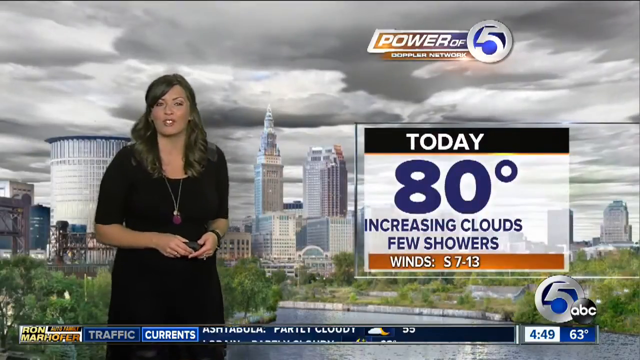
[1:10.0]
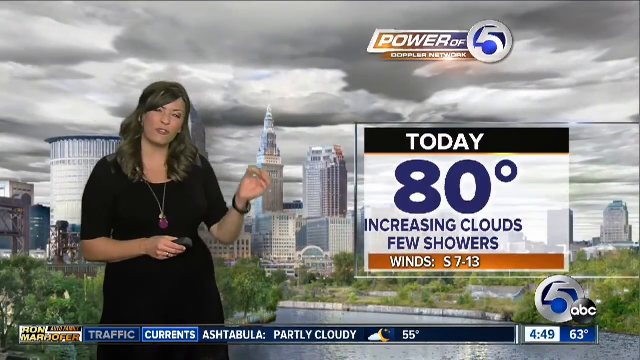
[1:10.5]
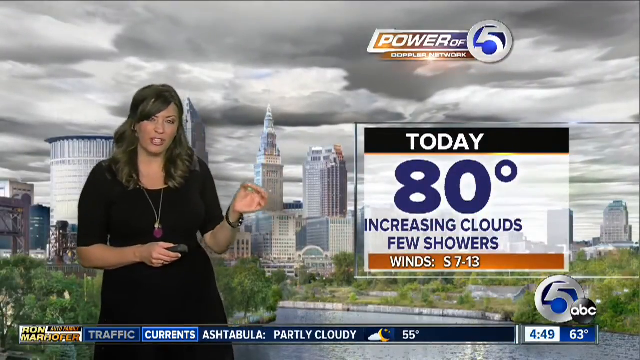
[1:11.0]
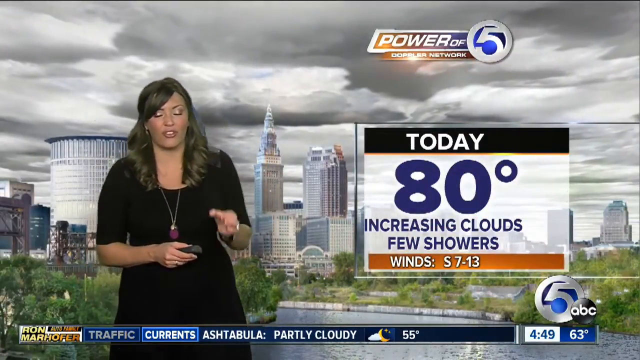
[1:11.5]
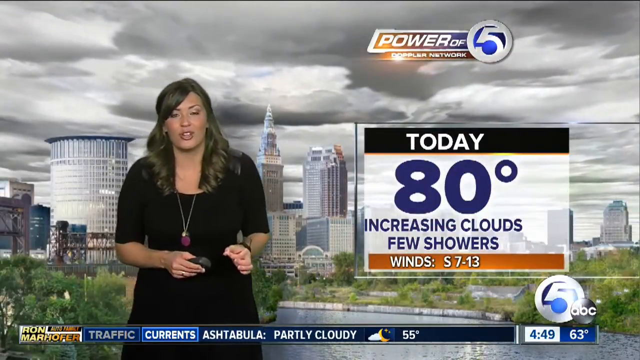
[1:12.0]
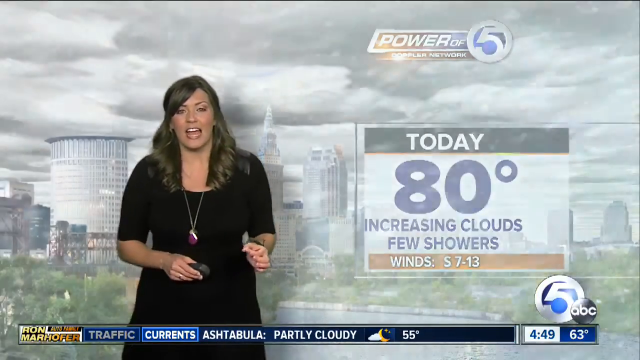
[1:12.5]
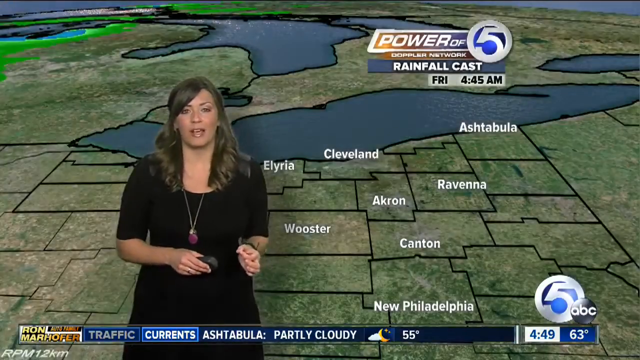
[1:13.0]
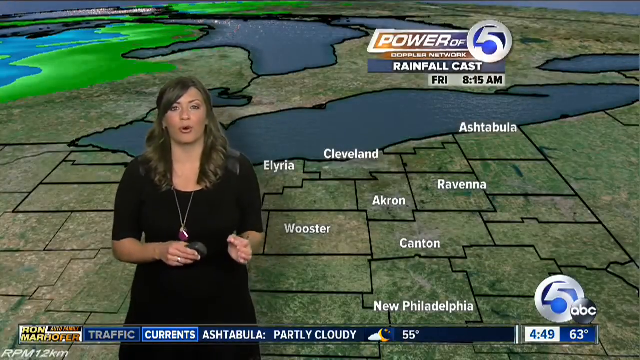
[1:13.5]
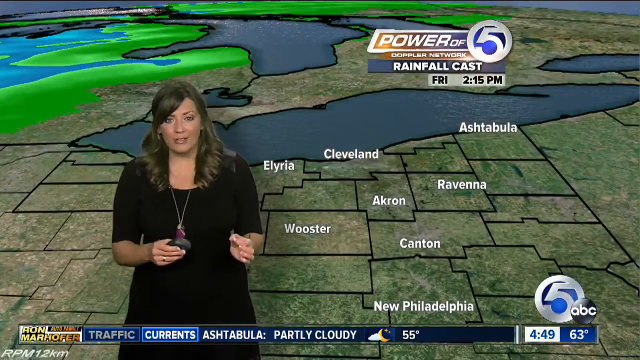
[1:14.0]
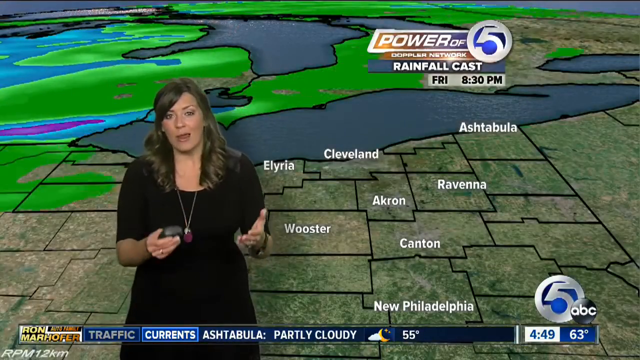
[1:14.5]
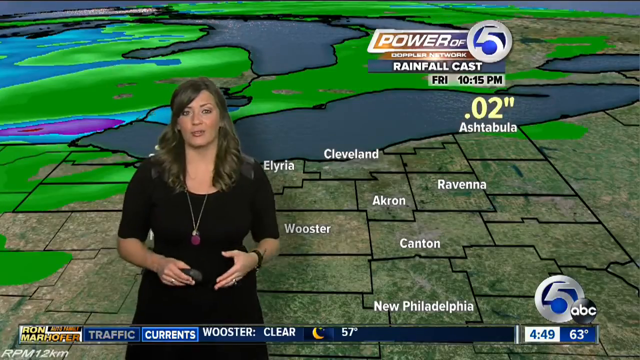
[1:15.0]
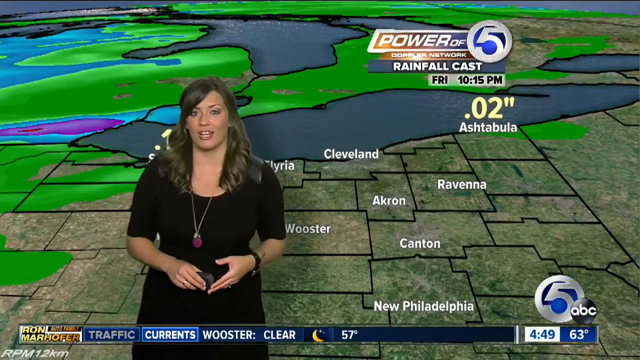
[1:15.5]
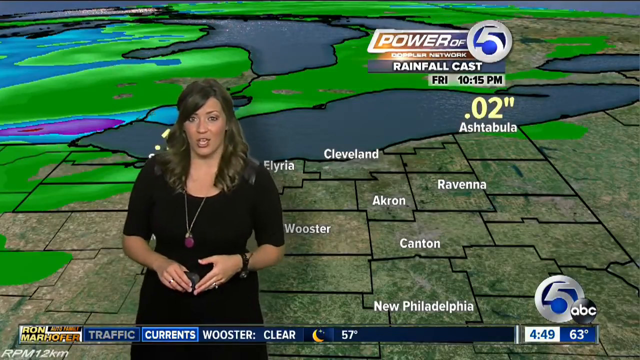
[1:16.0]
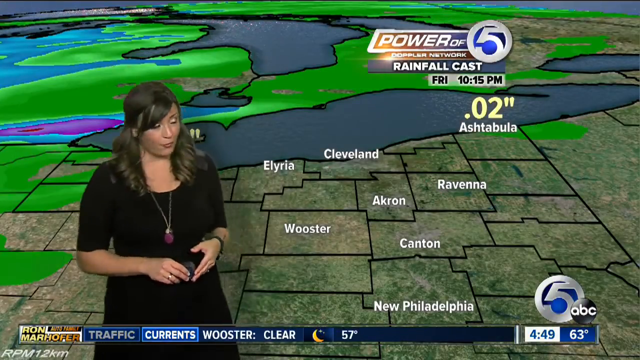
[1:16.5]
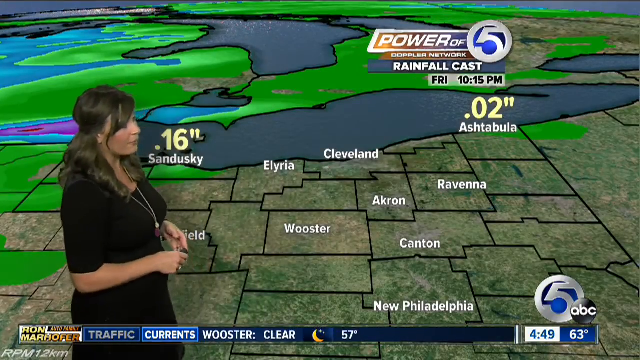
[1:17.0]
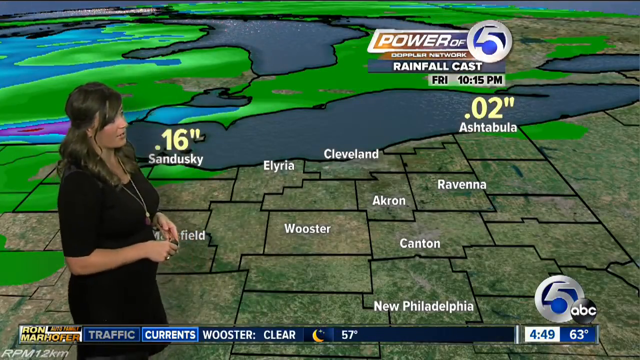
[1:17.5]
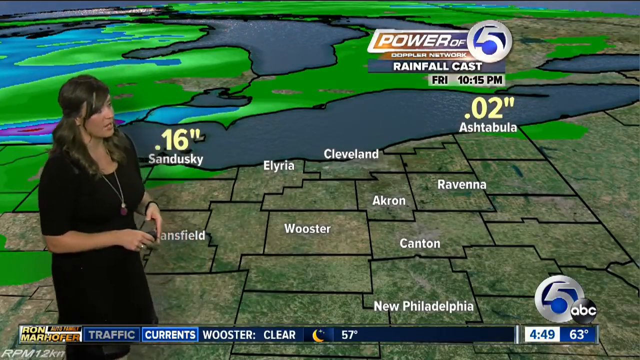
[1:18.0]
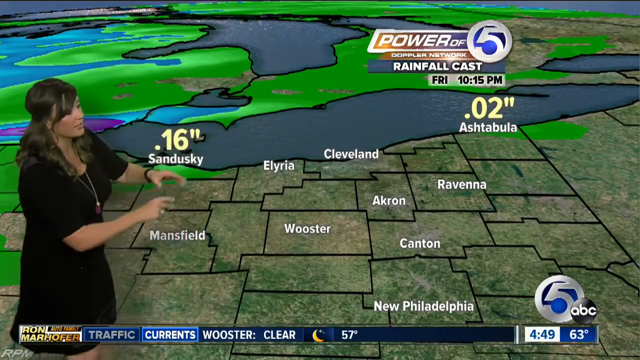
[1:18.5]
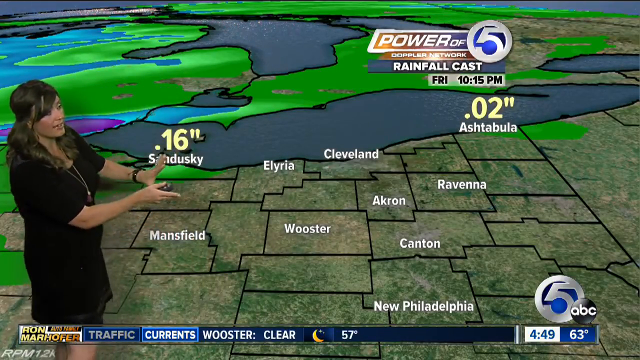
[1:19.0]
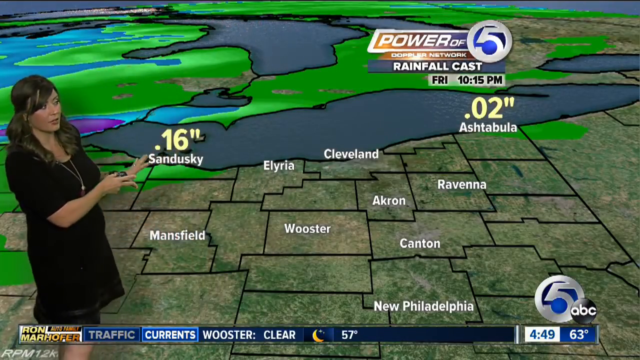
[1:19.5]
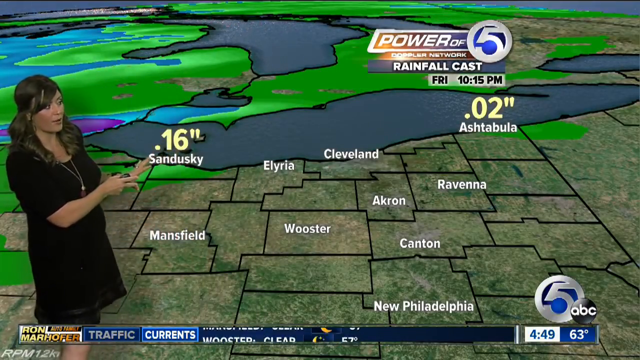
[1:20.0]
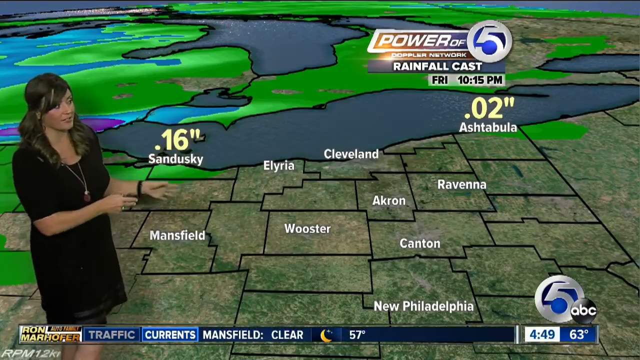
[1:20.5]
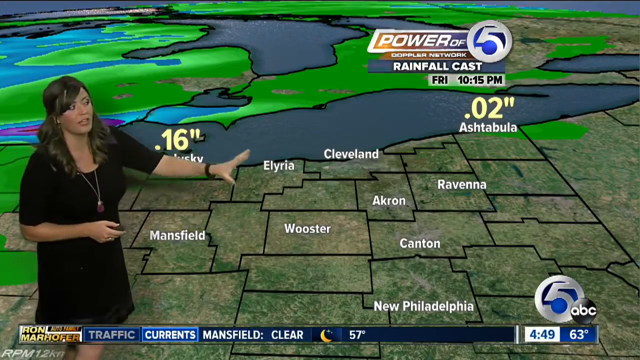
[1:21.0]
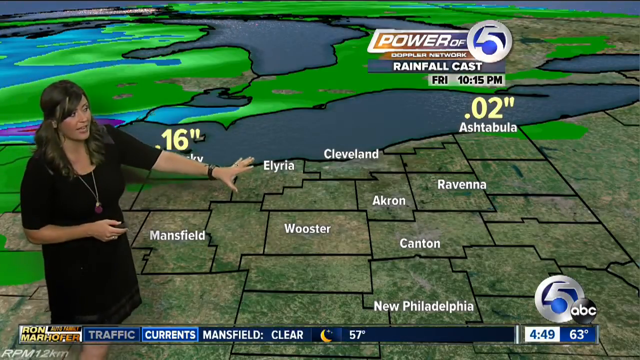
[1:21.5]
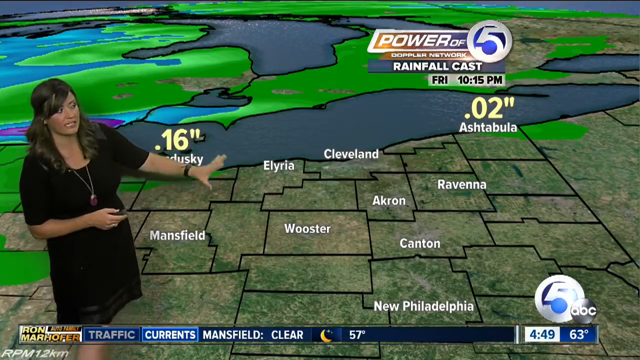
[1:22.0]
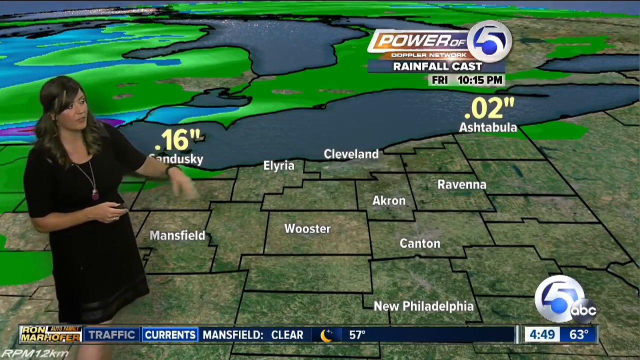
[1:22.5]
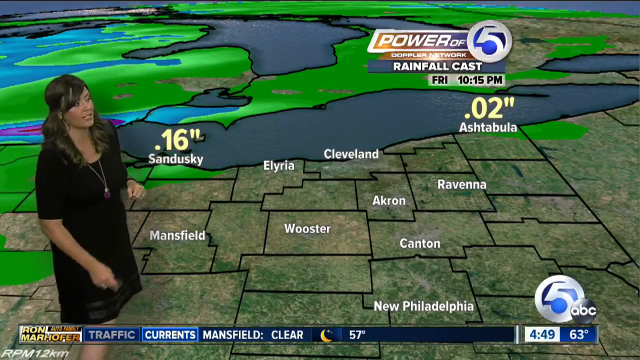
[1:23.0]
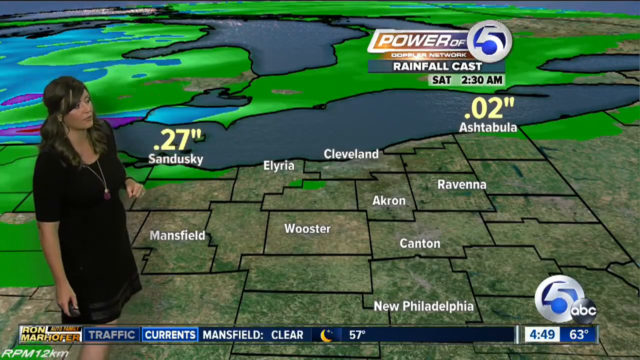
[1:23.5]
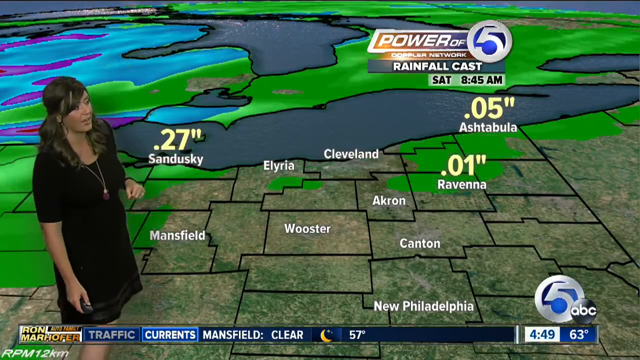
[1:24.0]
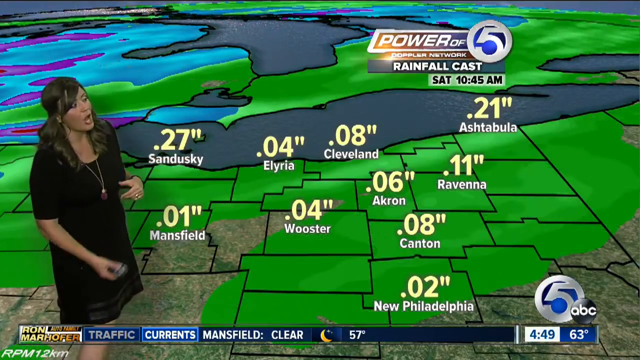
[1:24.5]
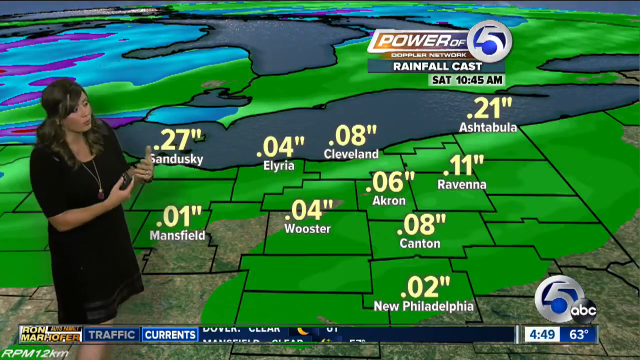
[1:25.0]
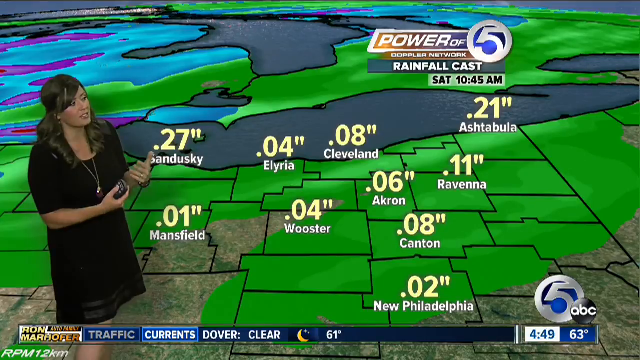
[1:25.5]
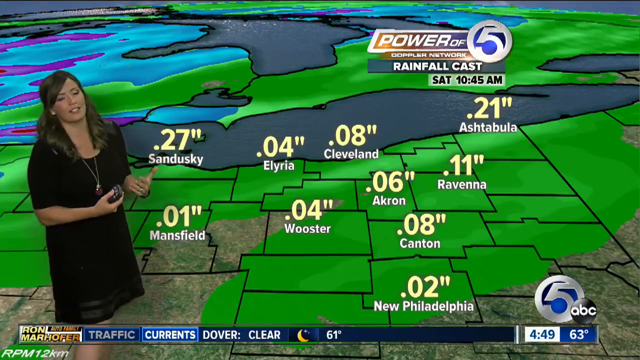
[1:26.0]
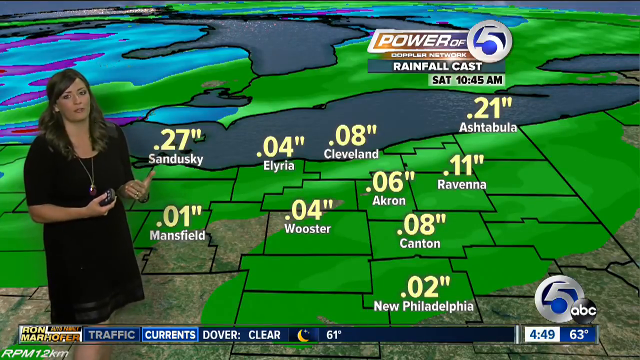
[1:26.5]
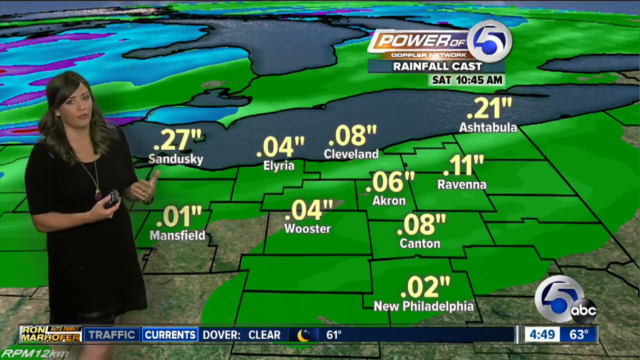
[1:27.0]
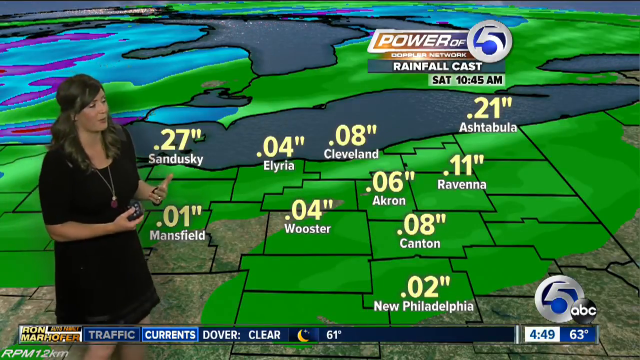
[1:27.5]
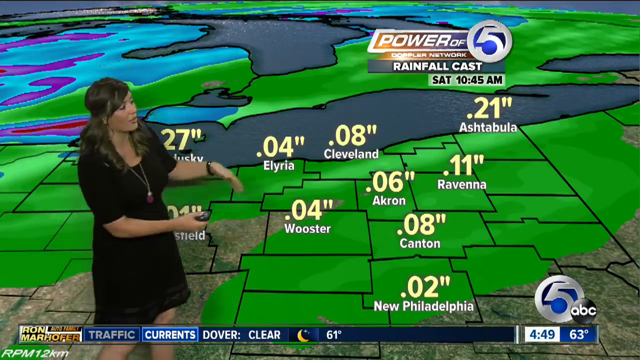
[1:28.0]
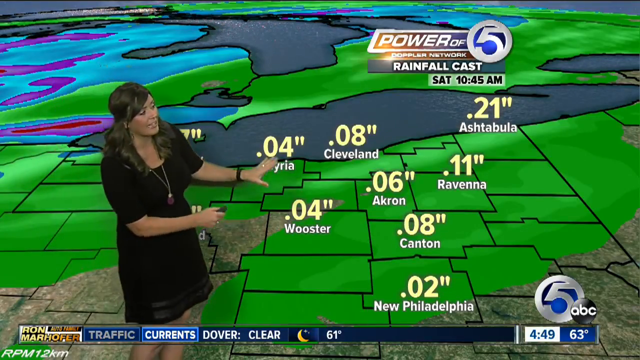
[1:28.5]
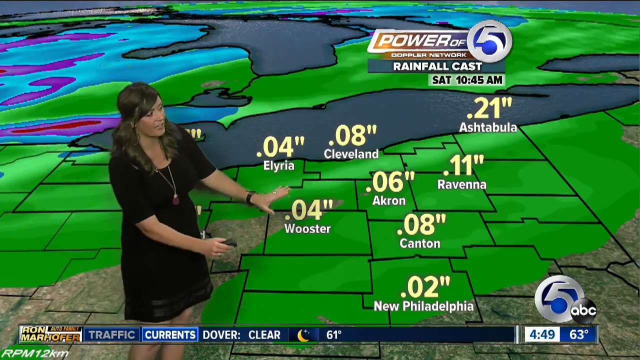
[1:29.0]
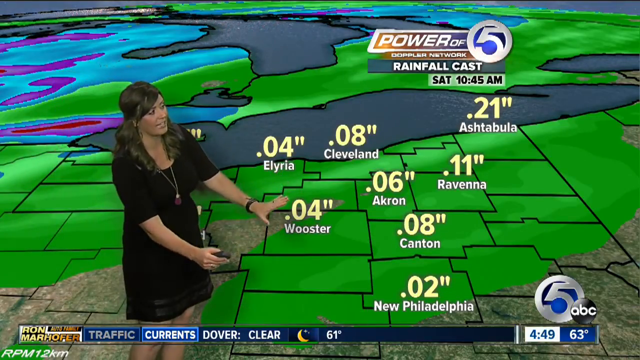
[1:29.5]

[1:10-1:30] The Channel 5 ABC logo is in the bottom right corner, with "449" and a current temperature of 63 degrees. A banner across the whole bottom of the screen reads "Ron". A young woman with hair down to the collar of her dress wears a long chain with a large amulet, a short-sleeved black dress, and a watch on her left arm. Another logo at the top reads "power of Channel 5 Doppler network". On screen it says "today 80 degrees, increasing clouds, a few showers". Tracy, the weather presenter, talks about rain coming into the area around Sandusky, Mansfield and Cleveland.